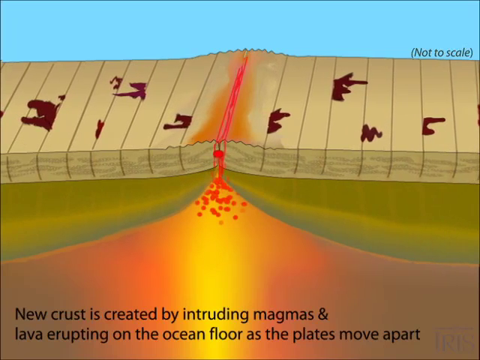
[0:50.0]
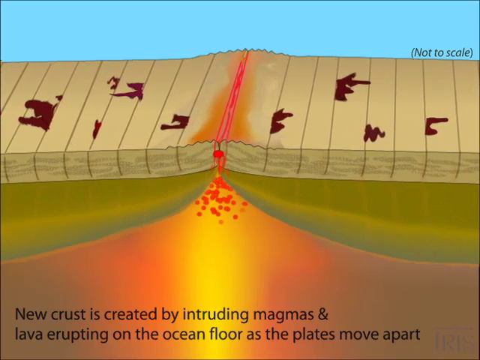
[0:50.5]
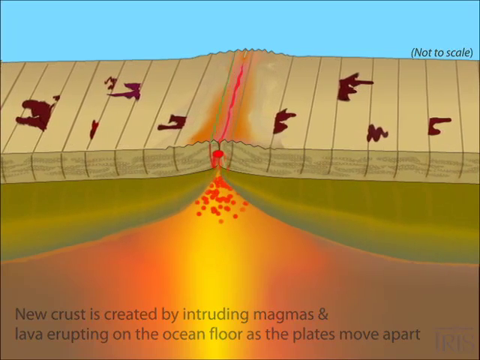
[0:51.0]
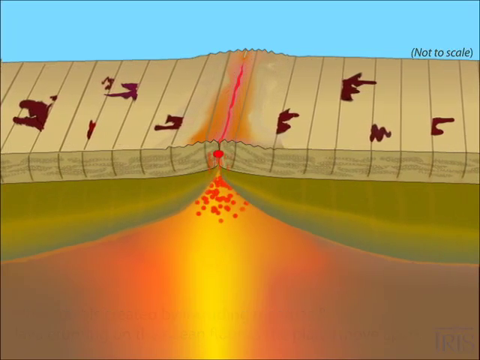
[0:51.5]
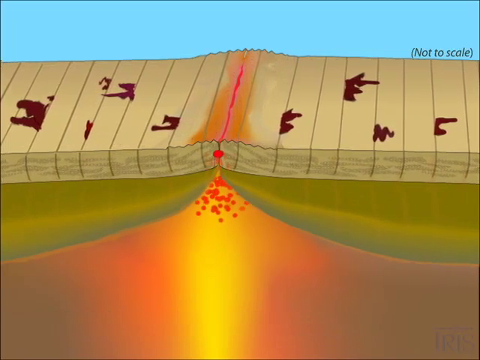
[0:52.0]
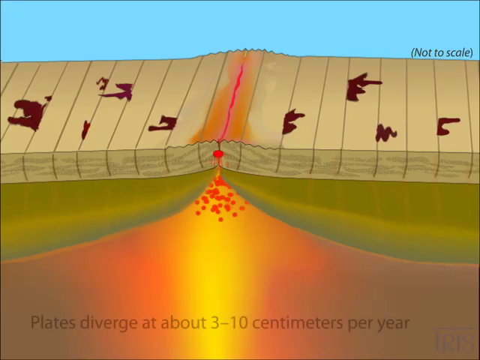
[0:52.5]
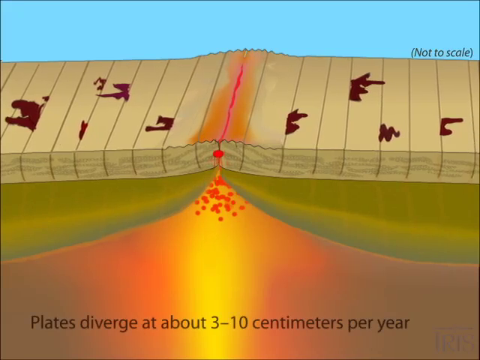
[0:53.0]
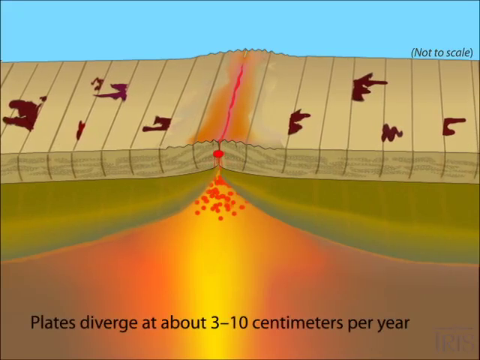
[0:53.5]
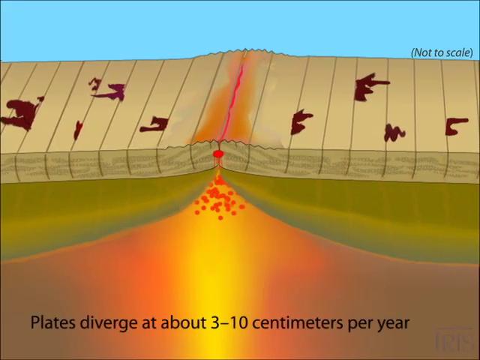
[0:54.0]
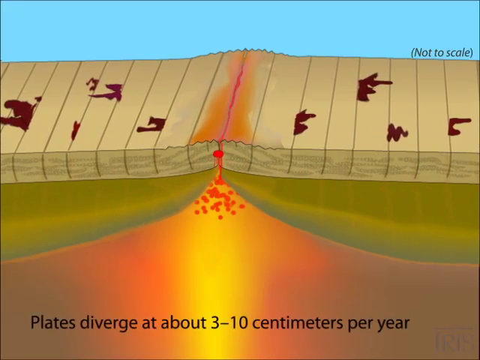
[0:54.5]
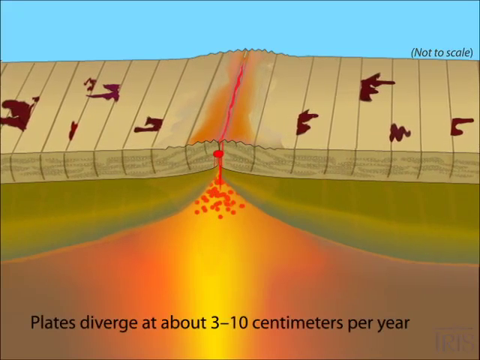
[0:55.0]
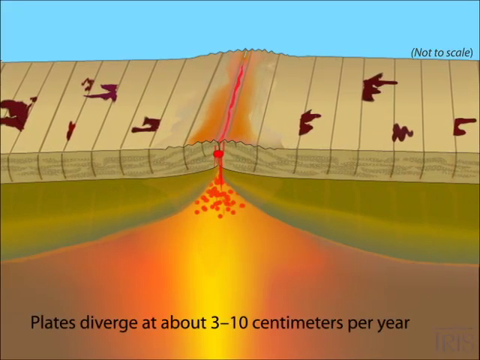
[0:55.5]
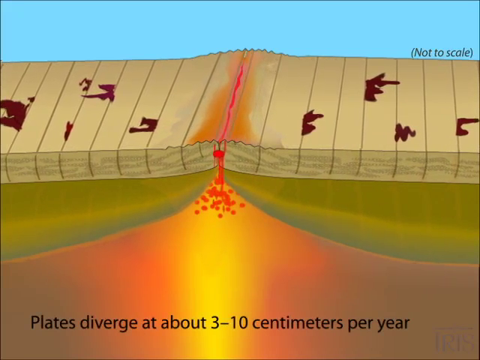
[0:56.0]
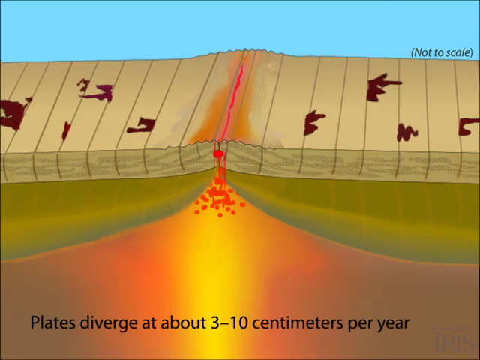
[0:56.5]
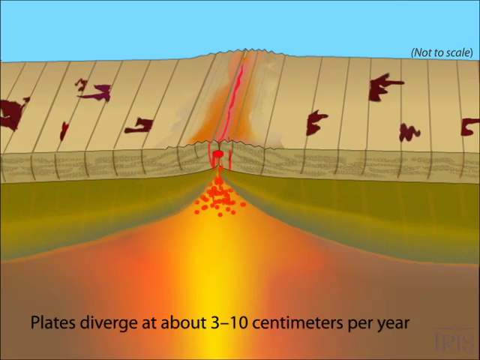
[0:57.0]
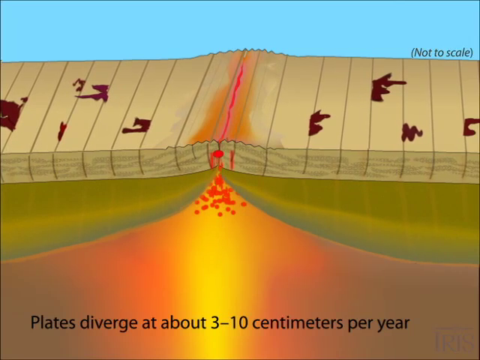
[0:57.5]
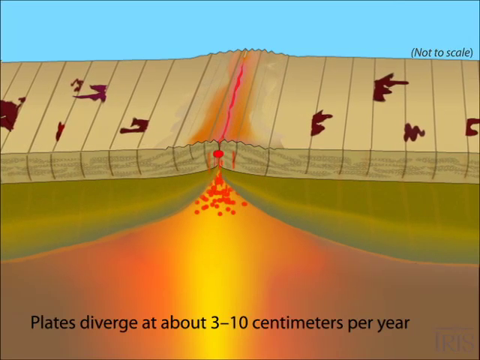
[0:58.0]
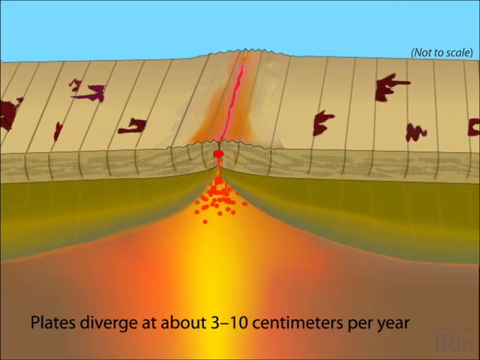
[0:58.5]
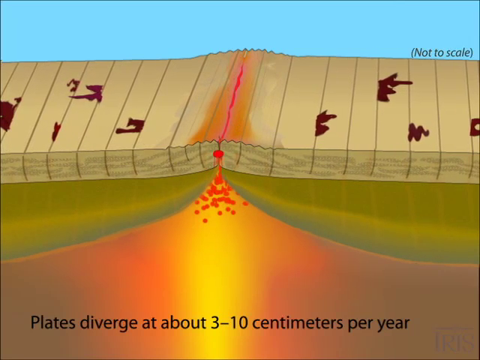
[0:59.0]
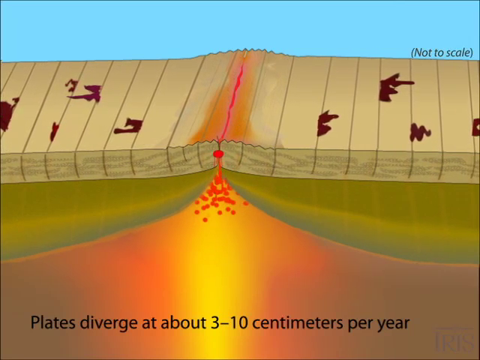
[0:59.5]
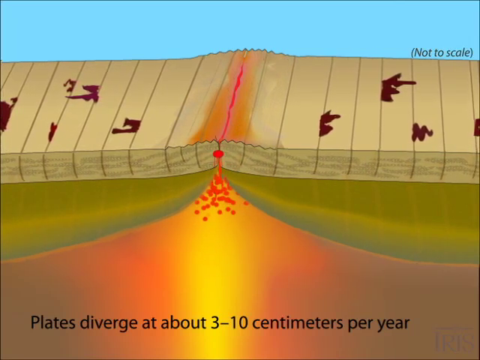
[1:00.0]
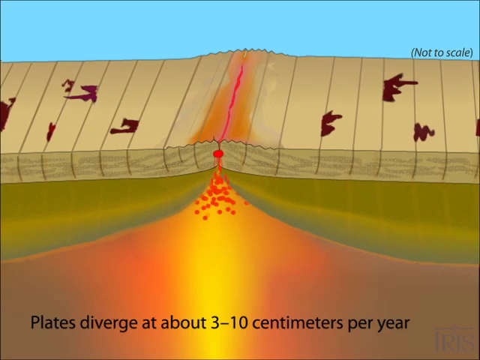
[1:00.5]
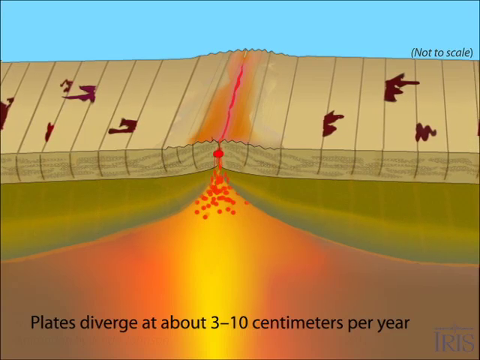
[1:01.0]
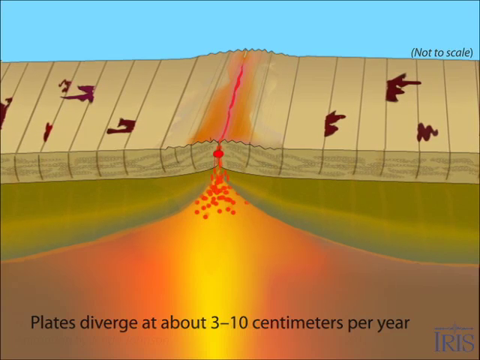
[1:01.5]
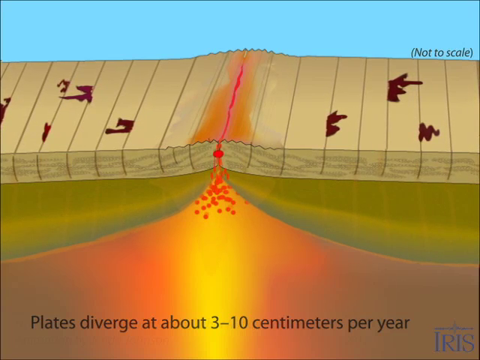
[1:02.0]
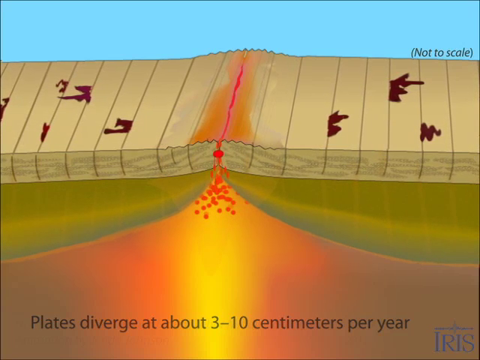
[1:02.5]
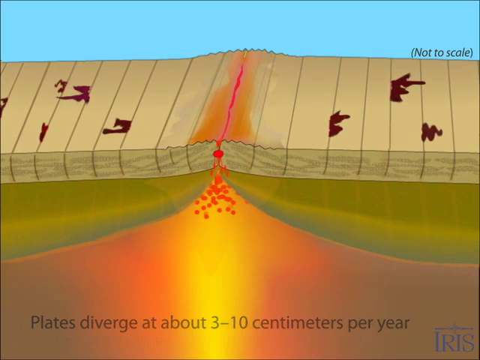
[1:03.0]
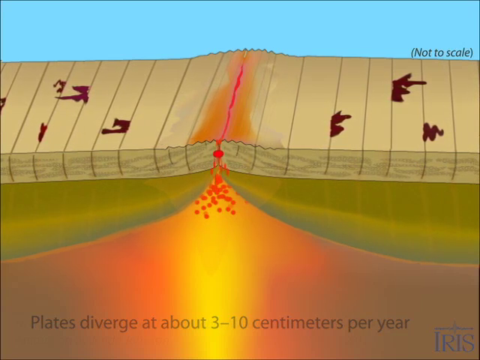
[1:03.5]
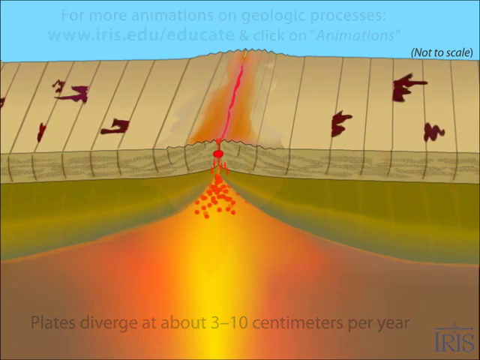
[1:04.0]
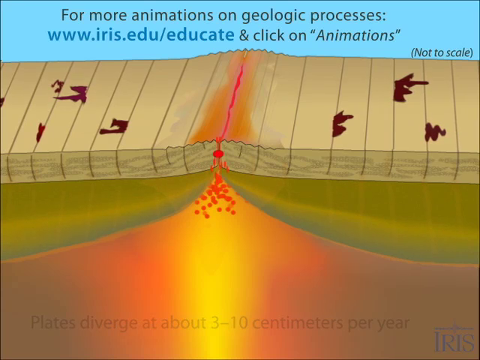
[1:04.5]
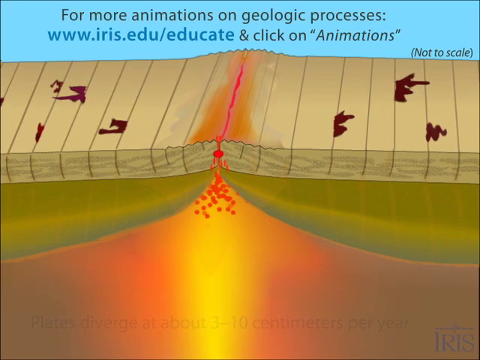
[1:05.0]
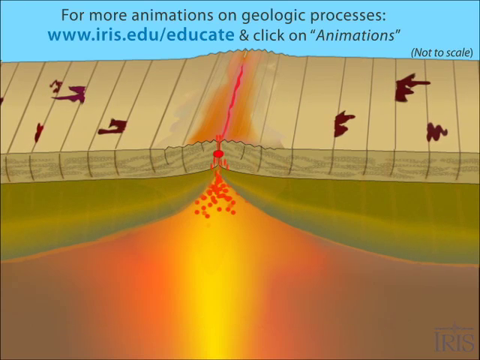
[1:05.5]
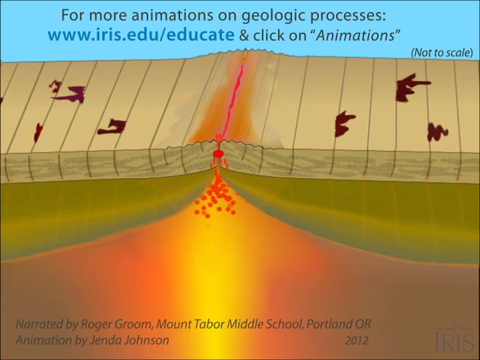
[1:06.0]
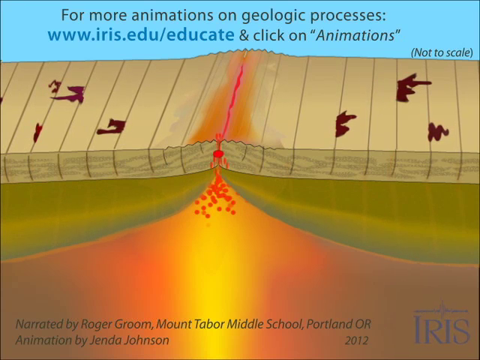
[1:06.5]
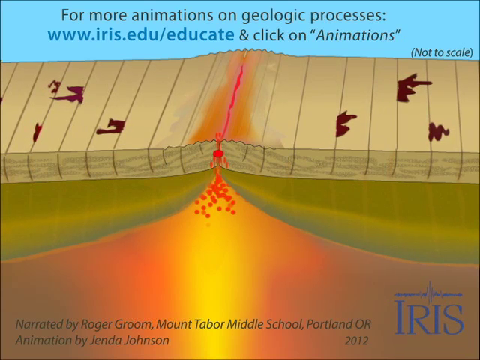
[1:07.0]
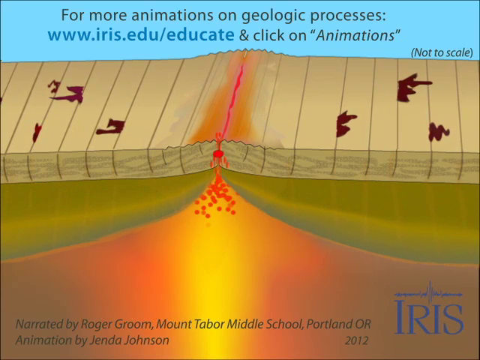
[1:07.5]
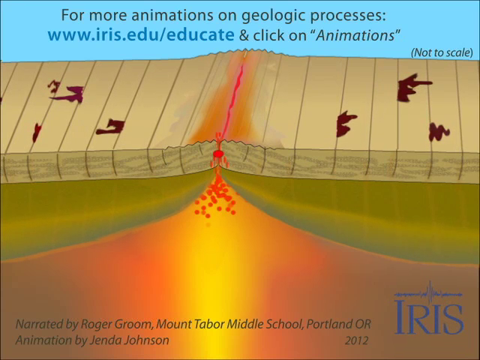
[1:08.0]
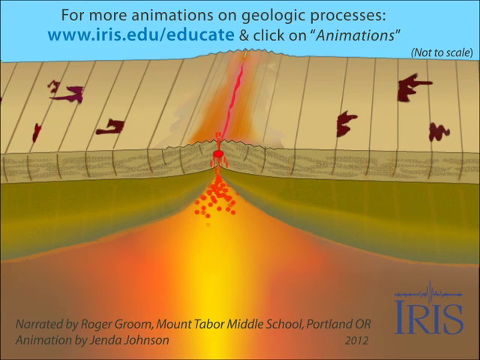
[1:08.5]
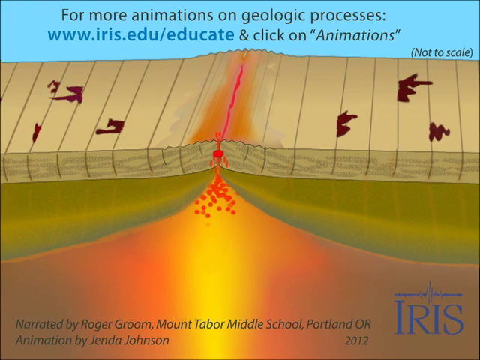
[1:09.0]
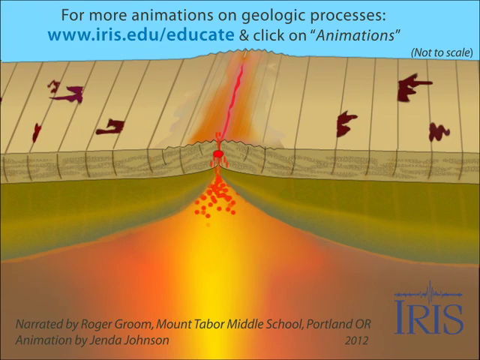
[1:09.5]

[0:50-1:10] A graphic shows the formation of a mid-ocean ridge as a cross-section of the layers of the earth below the ocean's floor. In the center of the screen a red mark indicates a mid-ocean ridge. Below it, the layers look as if they are rising up into a point, and red bubbles indicate magma moving up through the ridge. Text at the bottom of the screen reads "New crust is created by introducing magmas and lava erupting on the ocean floor as the plates move apart," then changes to "Plates diverge at about 3-10 centimeters per year." As the captions change, vertical lines move away from the red rupture in the crust, indicating the plates moving apart. At the end, text appears at the top of the screen reading "For more animation on geologic processes: www.iris.edu/educate & click on 'Animations.'"